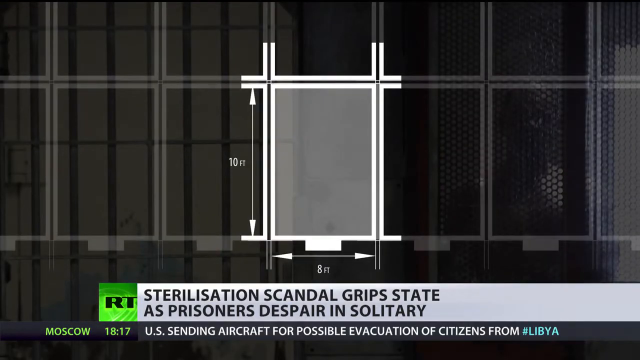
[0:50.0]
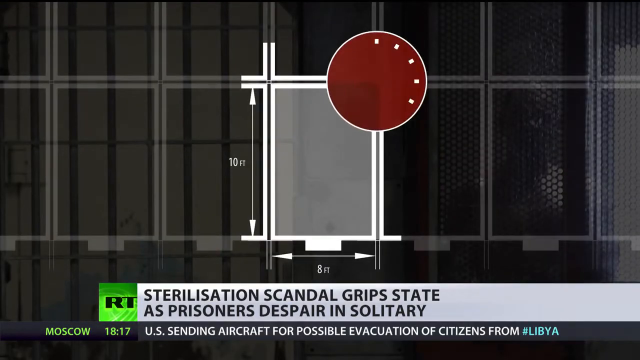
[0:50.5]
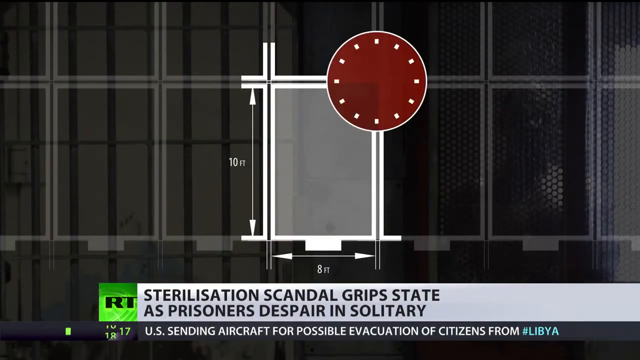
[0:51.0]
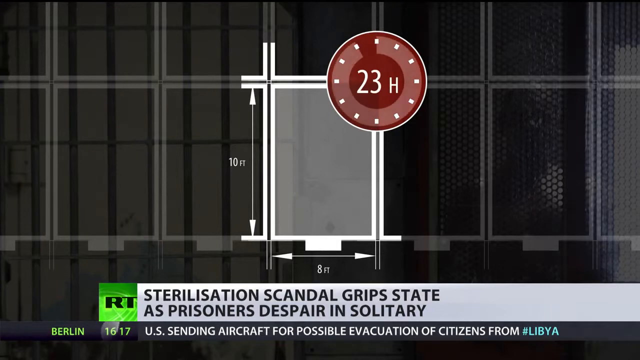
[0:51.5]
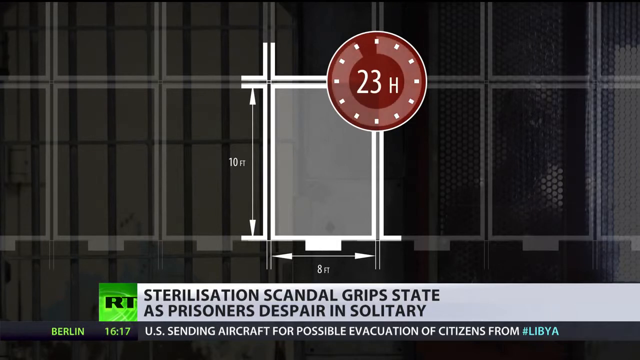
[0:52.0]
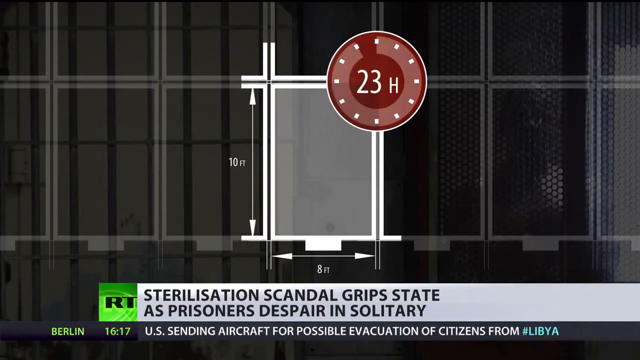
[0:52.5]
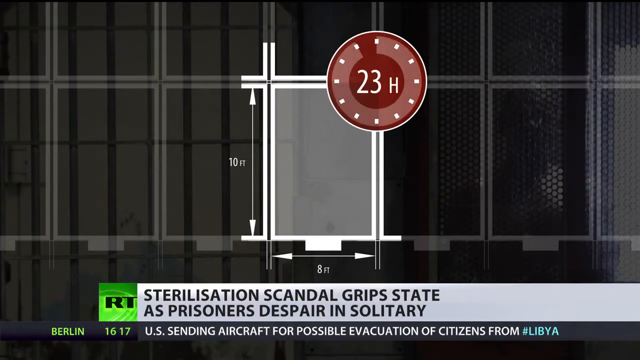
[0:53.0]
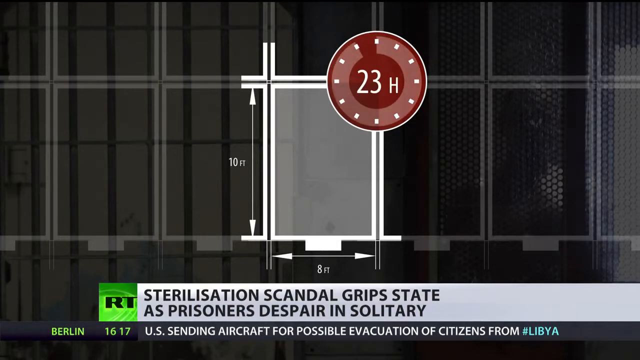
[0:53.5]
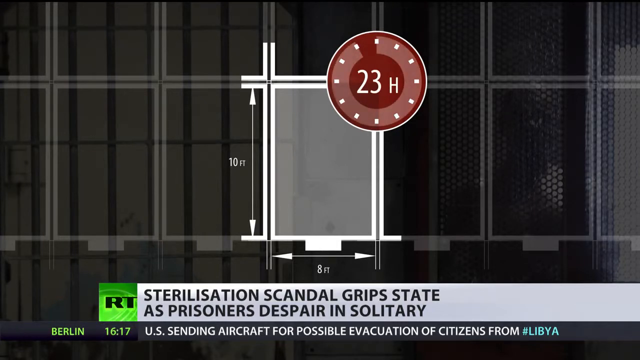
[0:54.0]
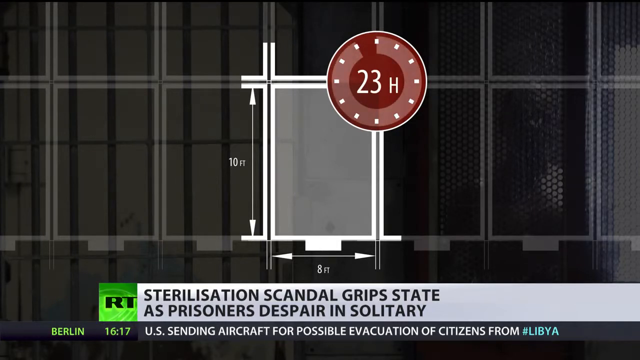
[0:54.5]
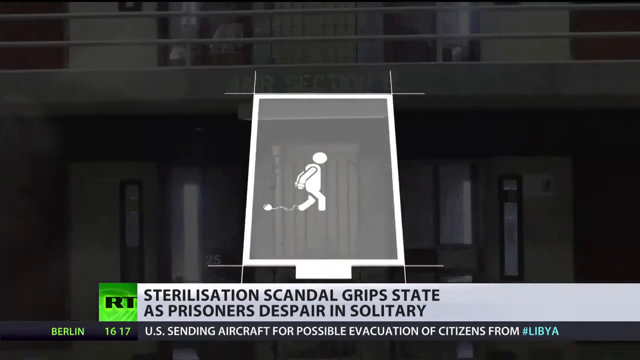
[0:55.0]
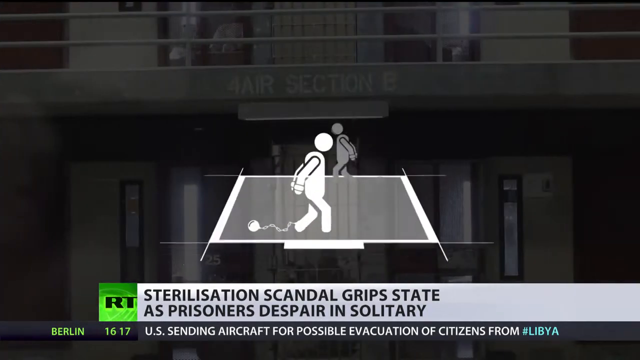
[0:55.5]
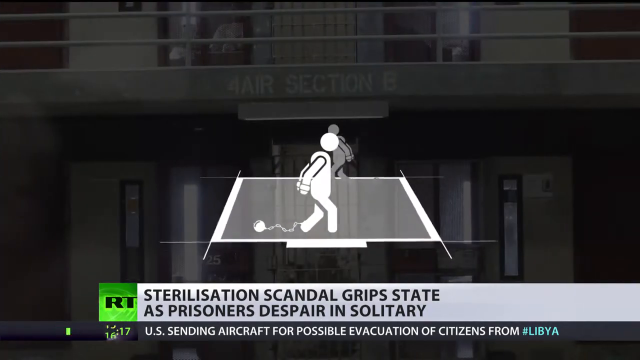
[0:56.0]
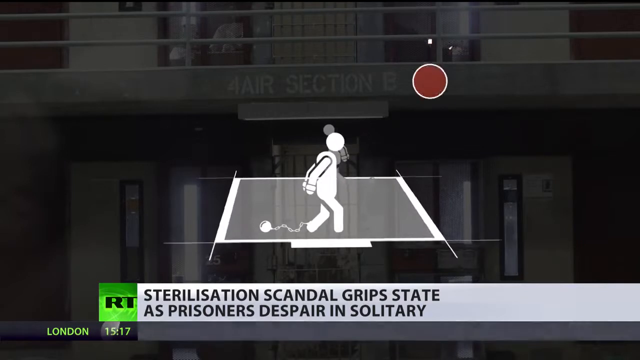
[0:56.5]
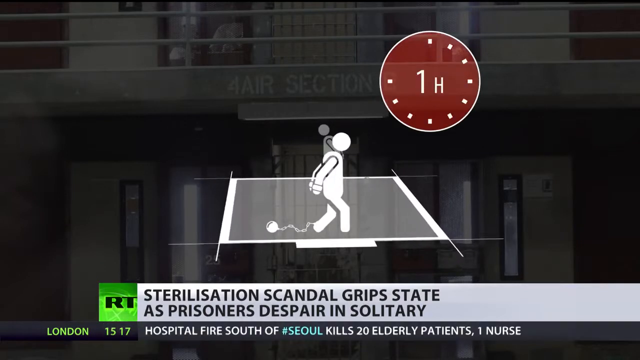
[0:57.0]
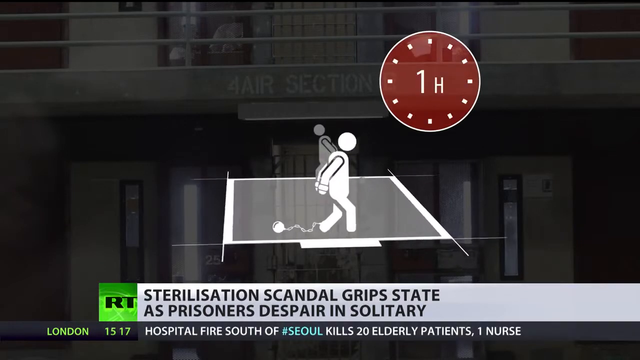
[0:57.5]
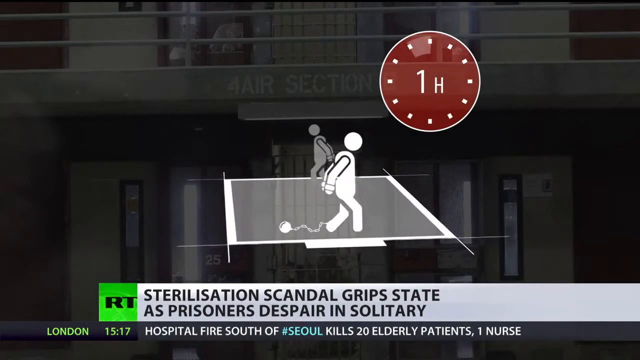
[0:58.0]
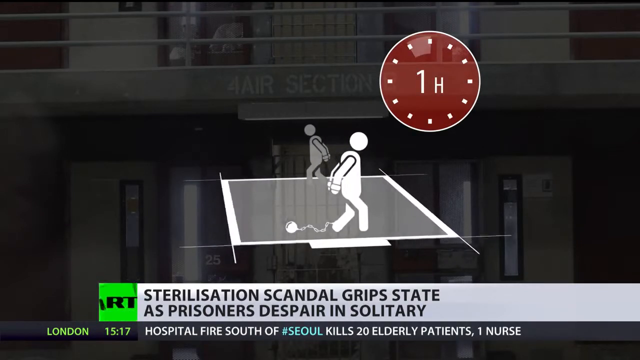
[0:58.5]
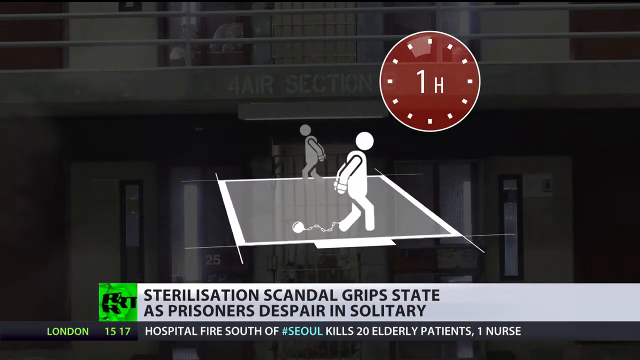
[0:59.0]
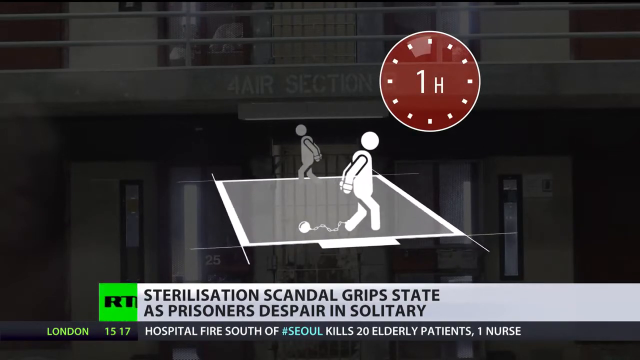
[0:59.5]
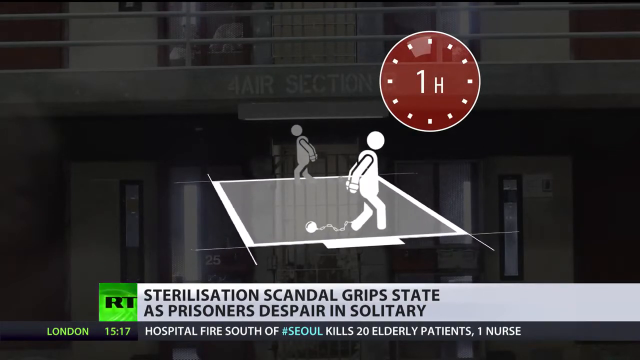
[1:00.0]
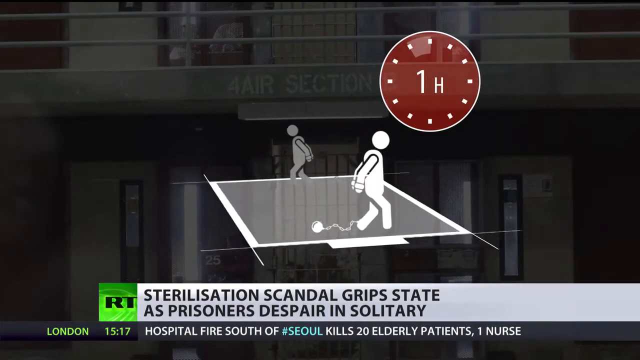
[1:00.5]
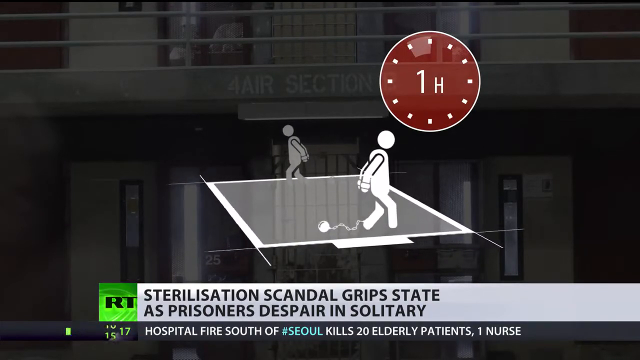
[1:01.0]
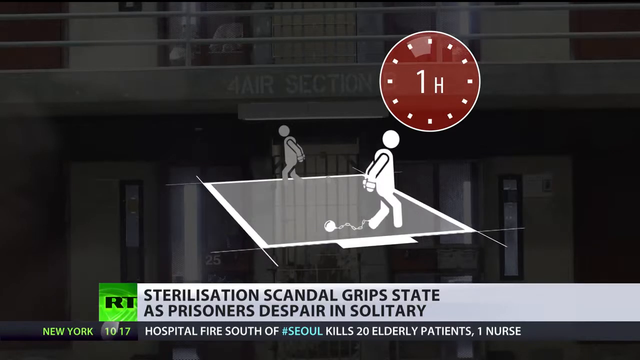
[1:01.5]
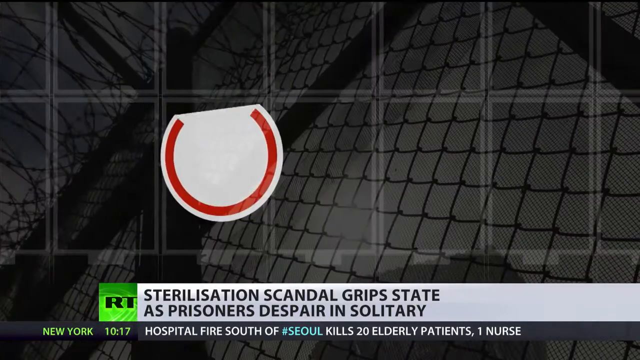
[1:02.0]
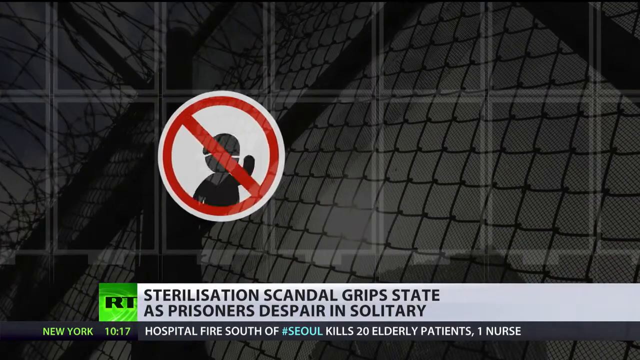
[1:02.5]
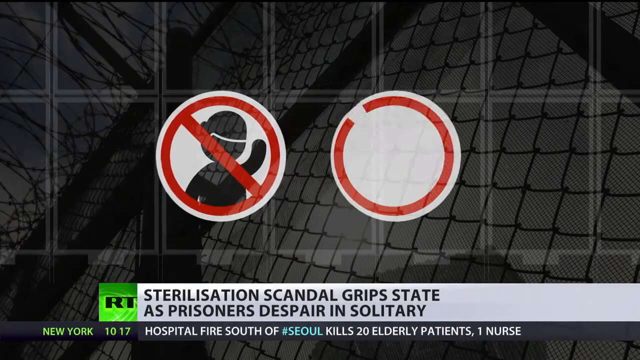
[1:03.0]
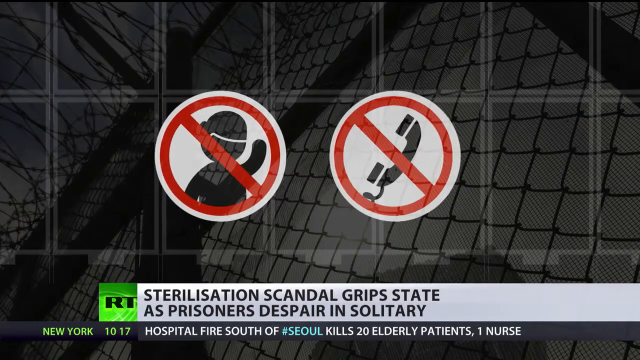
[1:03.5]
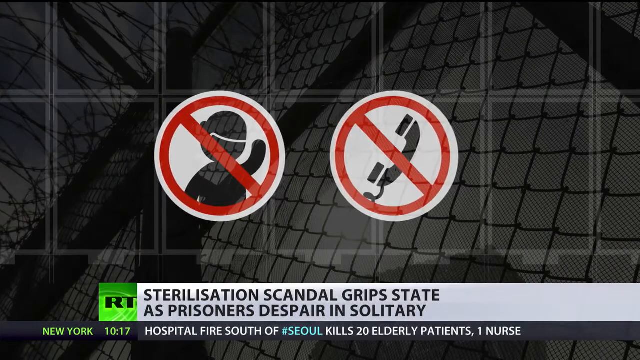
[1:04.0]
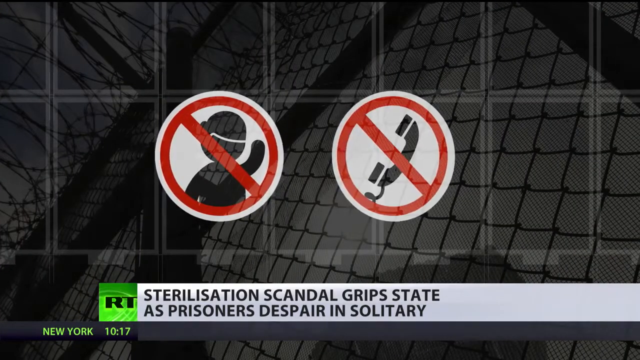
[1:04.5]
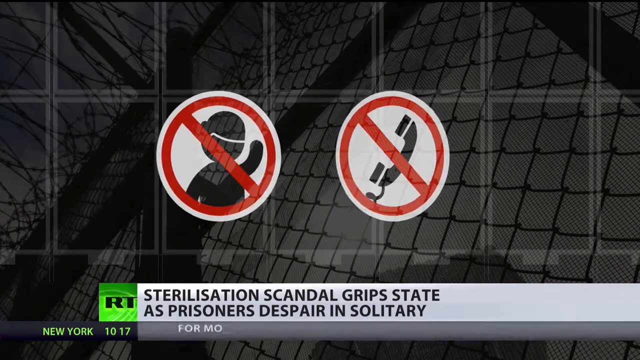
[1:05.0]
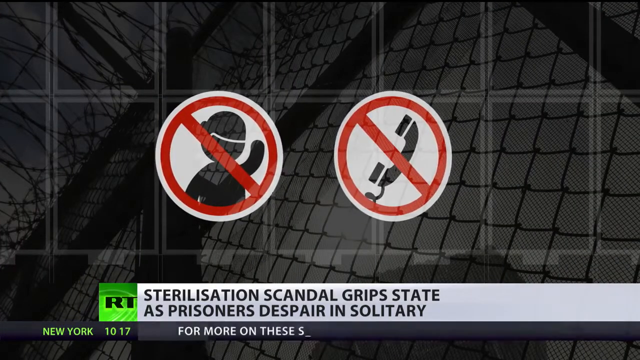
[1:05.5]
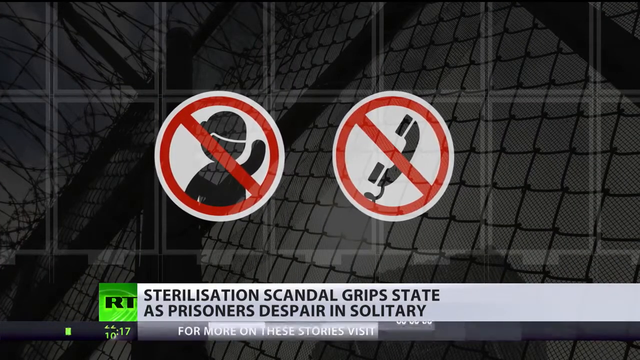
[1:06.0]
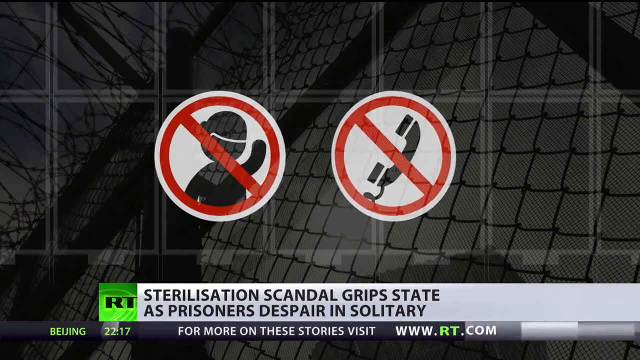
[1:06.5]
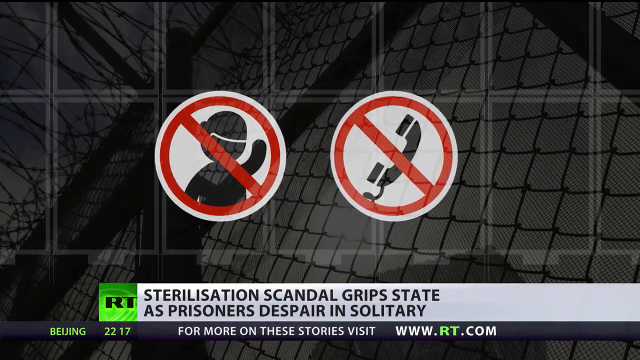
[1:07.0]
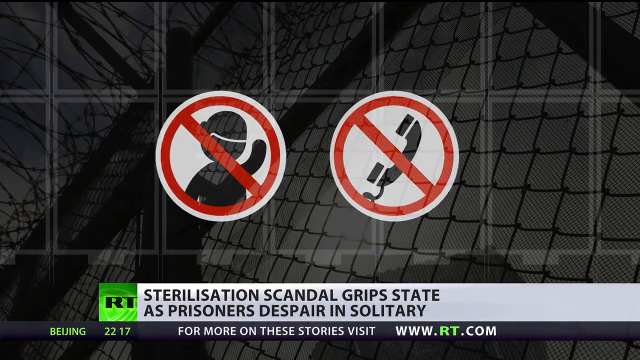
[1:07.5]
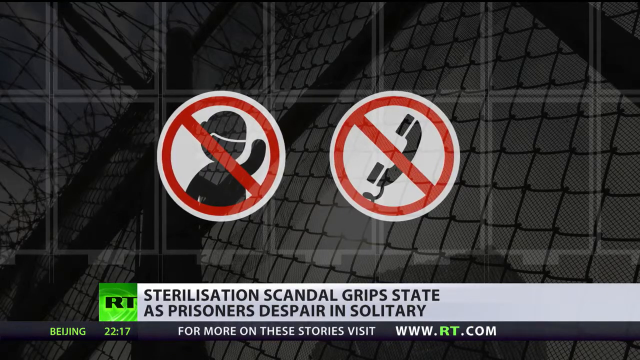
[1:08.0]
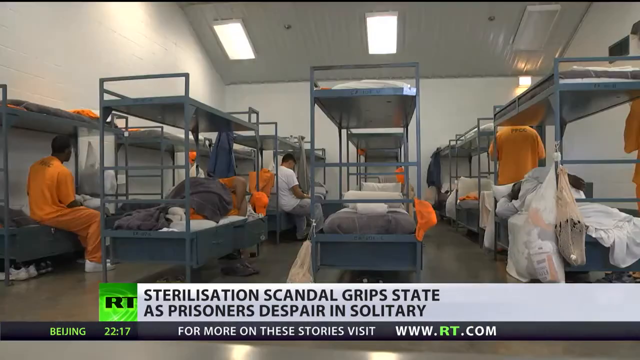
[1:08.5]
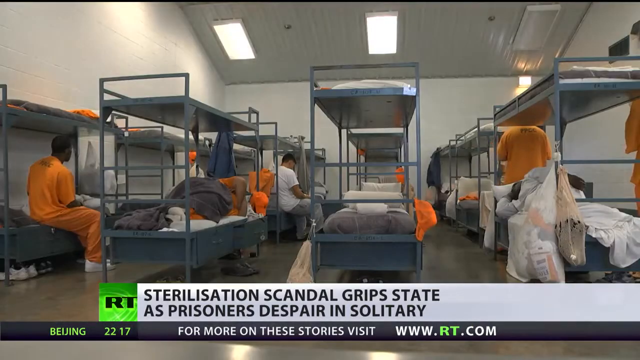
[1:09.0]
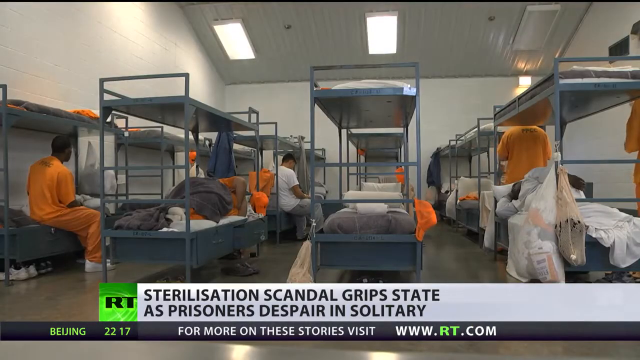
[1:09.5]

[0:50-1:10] A window is shown with the text "10 foot by 8 foot" and "23 hours", apparently giving the window's dimensions, while the title "sterilization scandal grips state as prisoners despair in solitary" appears at the bottom. Another diagram shows what look like chained-up prisoners with a ball and chain around the foot as well as handcuffs, labeled "1 hour". A sign then pops up reading "no phone calls, no persons". The view moves inside a group cell, where many prisoners in large jumpsuits are among white bunk beds with white sheets. The floors look like concrete, and the building looks very uncomfortable to be in.